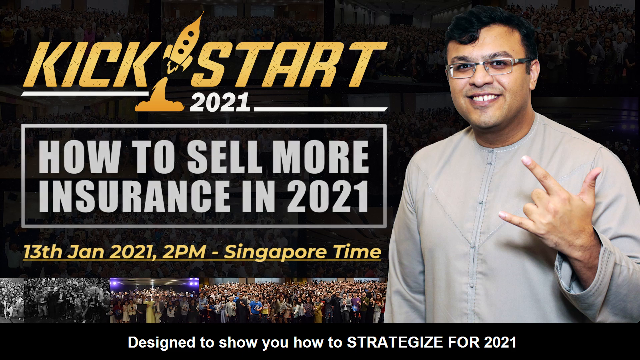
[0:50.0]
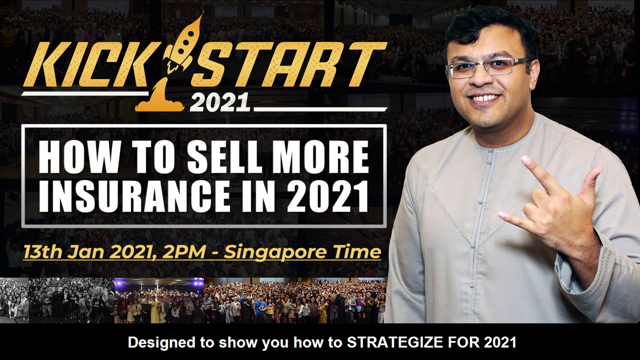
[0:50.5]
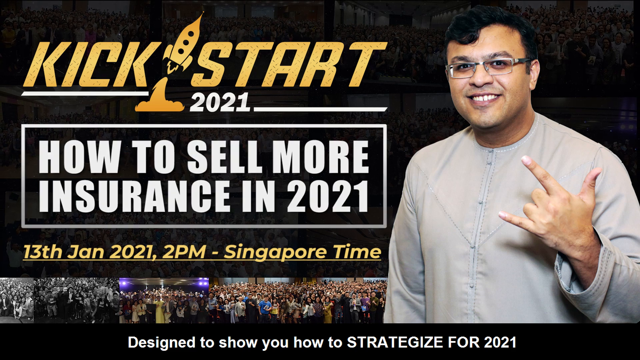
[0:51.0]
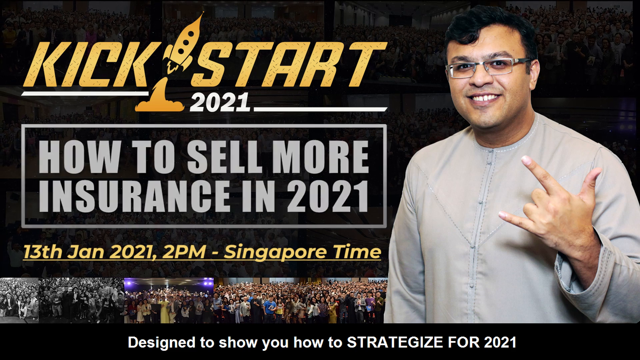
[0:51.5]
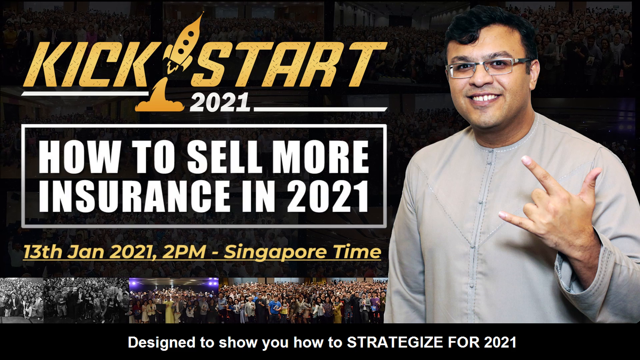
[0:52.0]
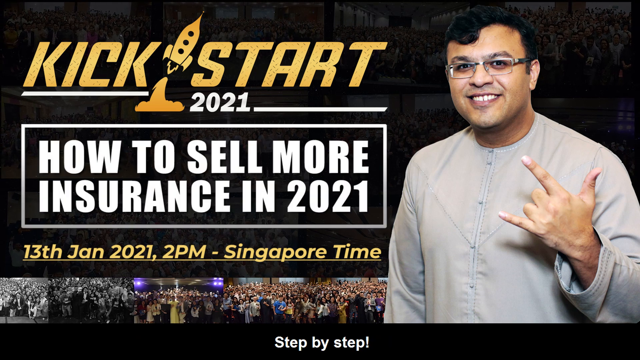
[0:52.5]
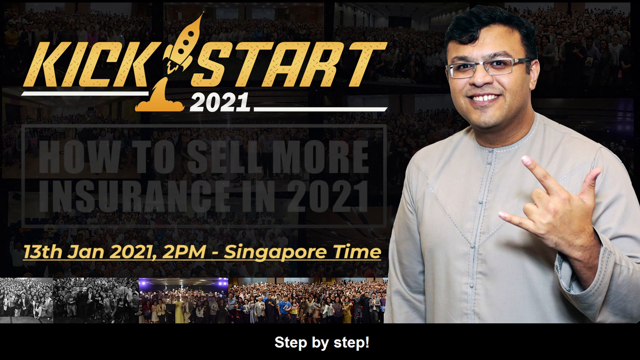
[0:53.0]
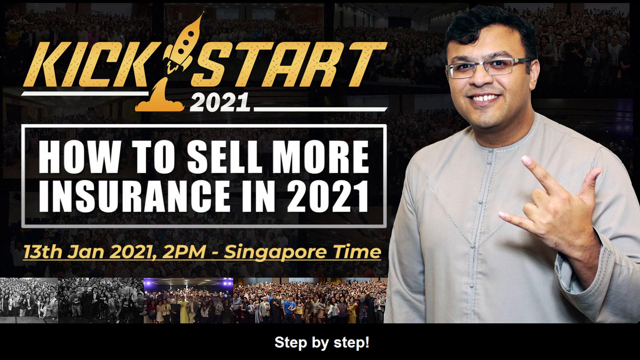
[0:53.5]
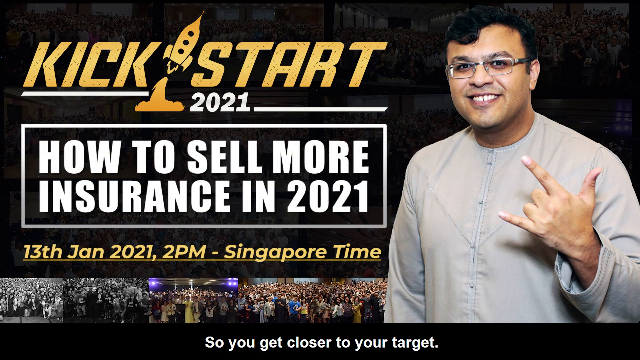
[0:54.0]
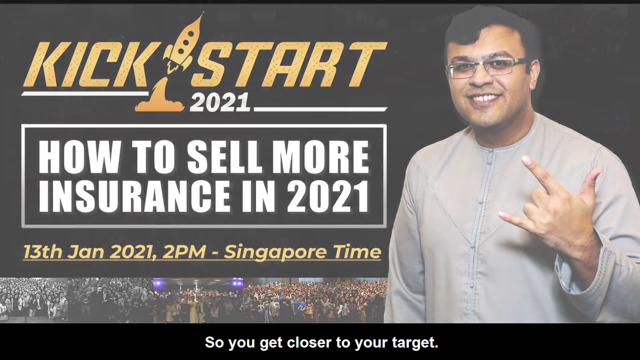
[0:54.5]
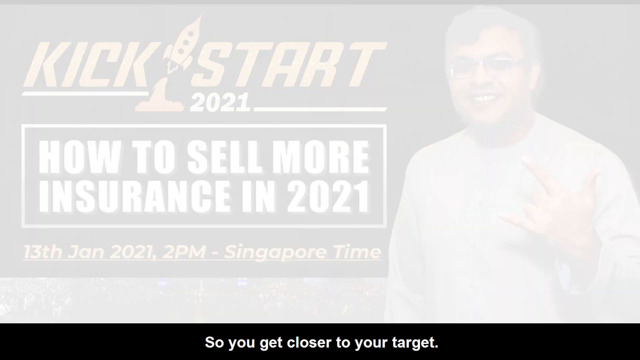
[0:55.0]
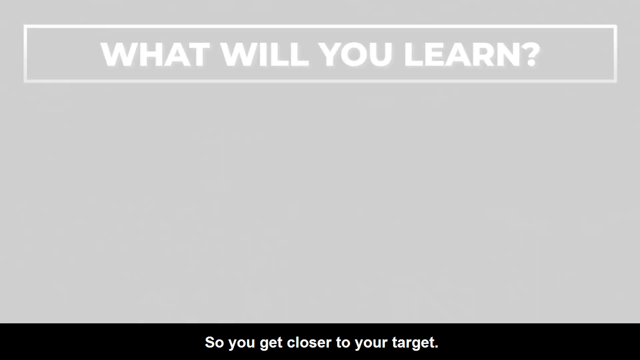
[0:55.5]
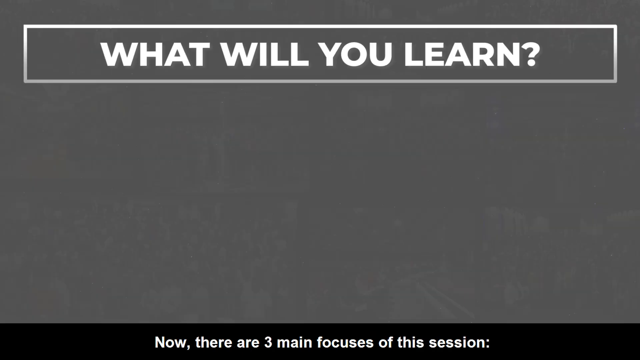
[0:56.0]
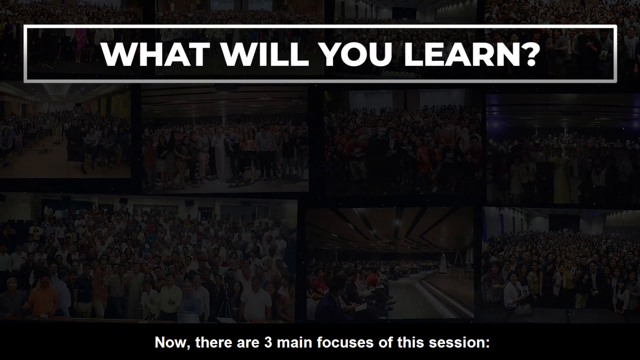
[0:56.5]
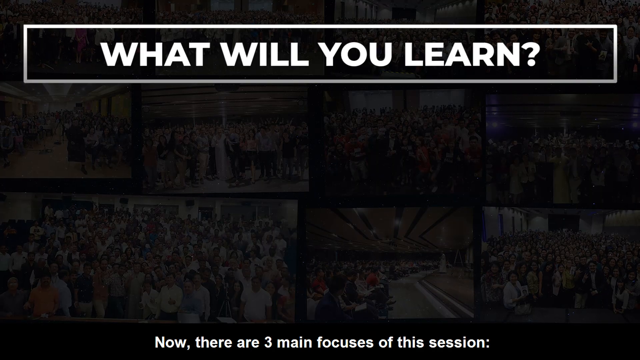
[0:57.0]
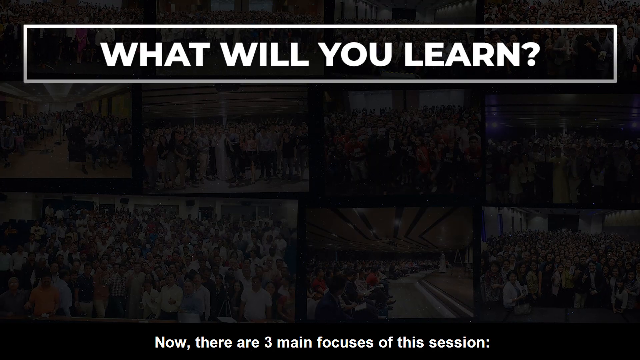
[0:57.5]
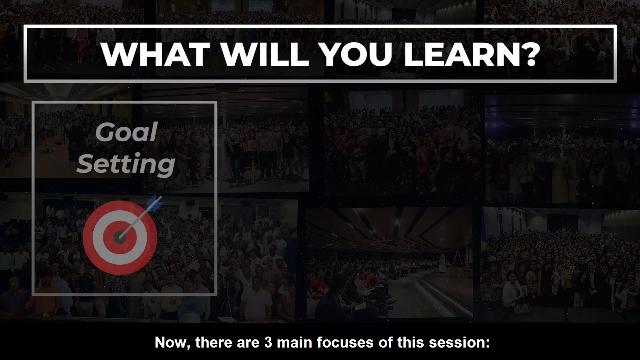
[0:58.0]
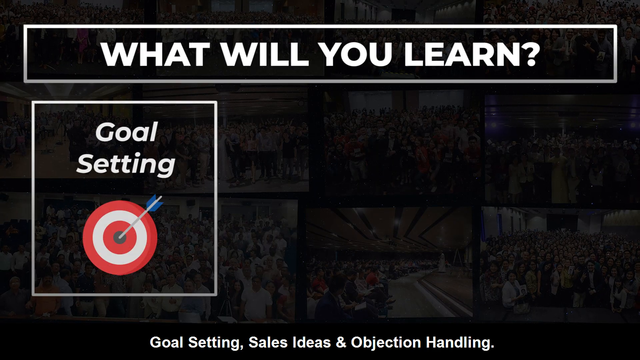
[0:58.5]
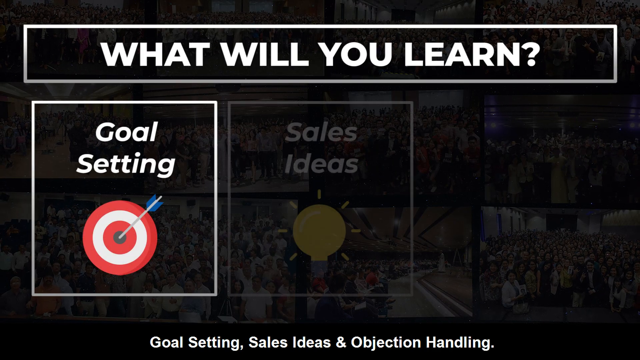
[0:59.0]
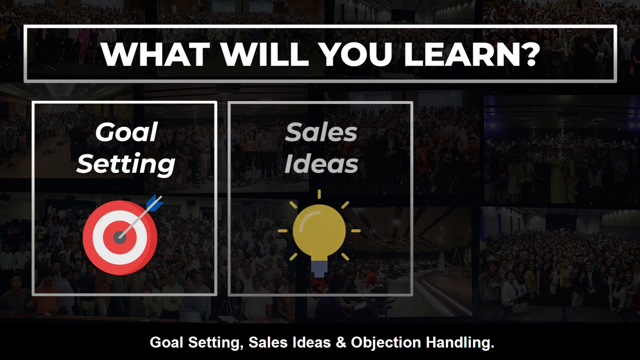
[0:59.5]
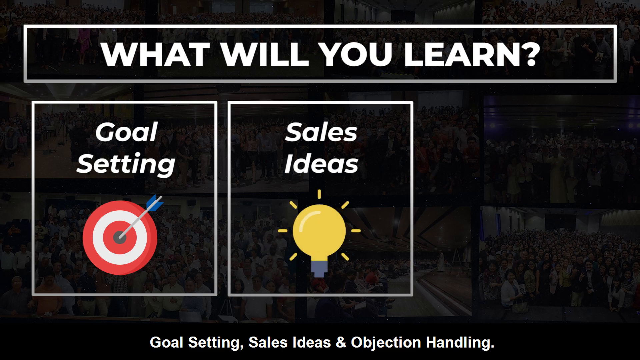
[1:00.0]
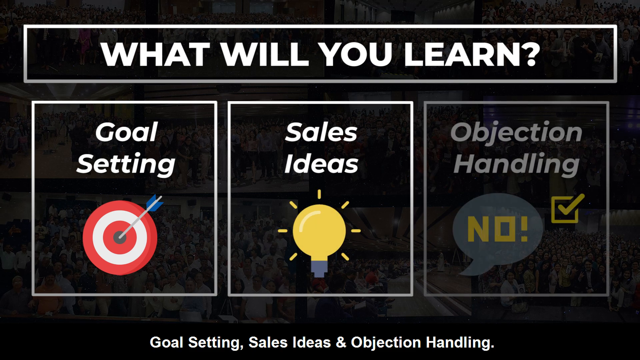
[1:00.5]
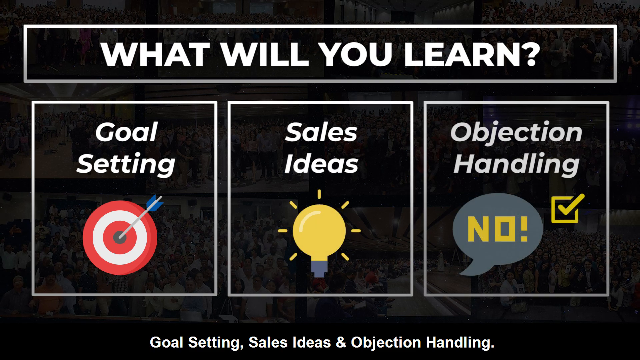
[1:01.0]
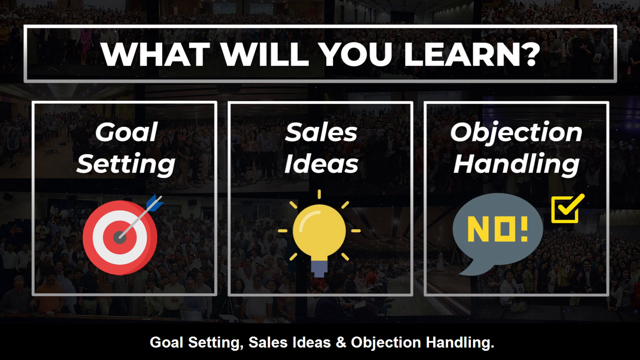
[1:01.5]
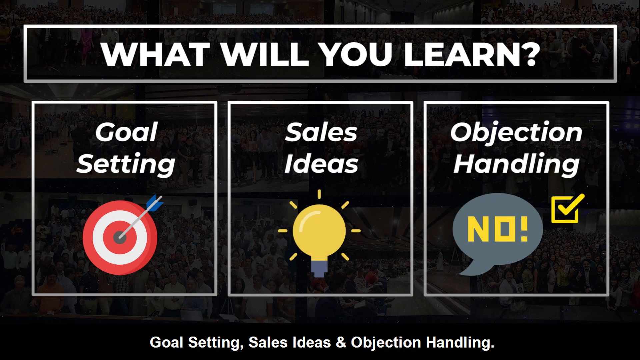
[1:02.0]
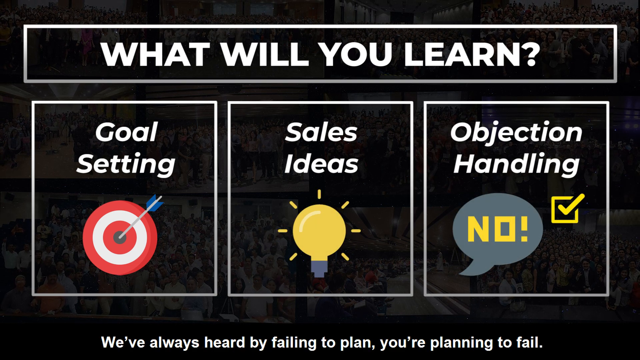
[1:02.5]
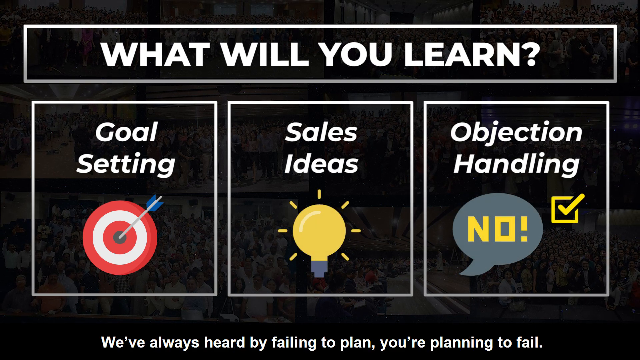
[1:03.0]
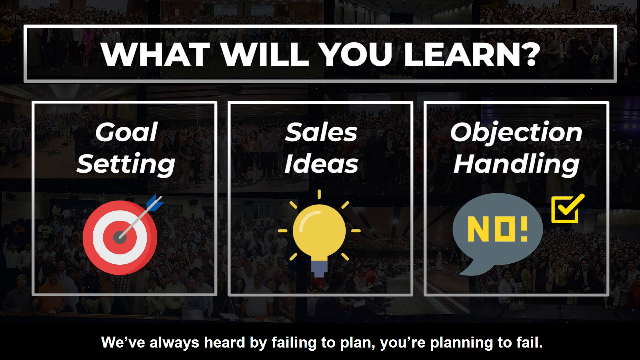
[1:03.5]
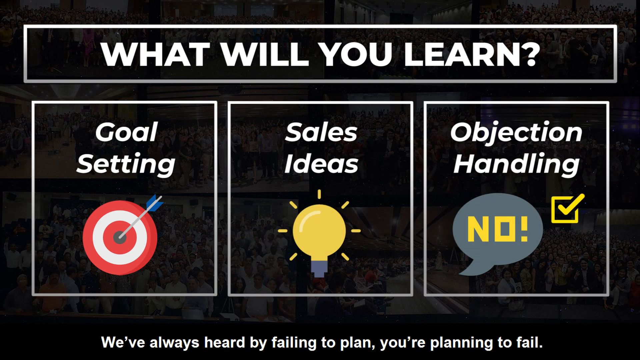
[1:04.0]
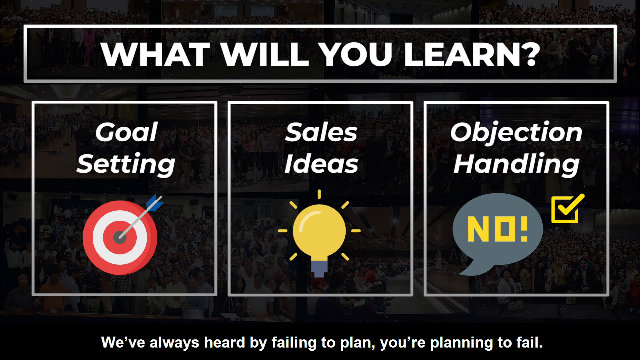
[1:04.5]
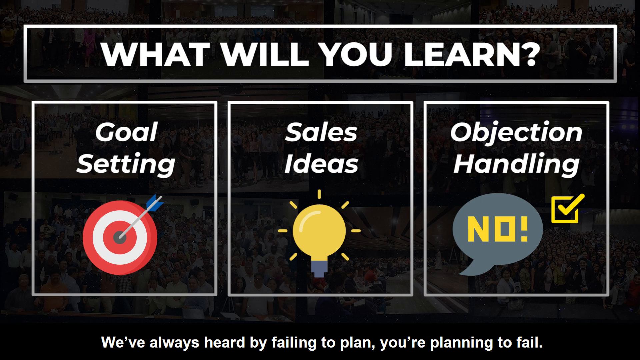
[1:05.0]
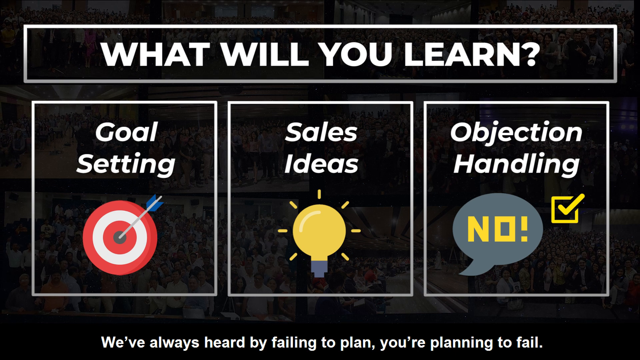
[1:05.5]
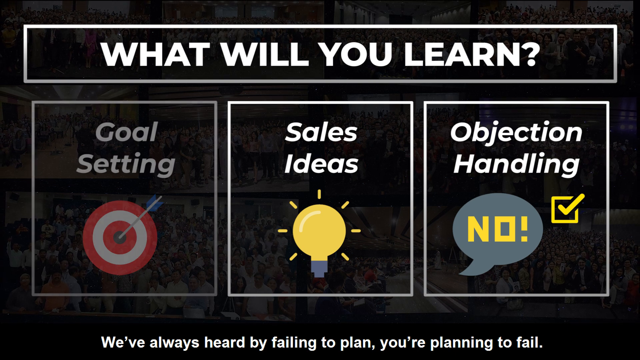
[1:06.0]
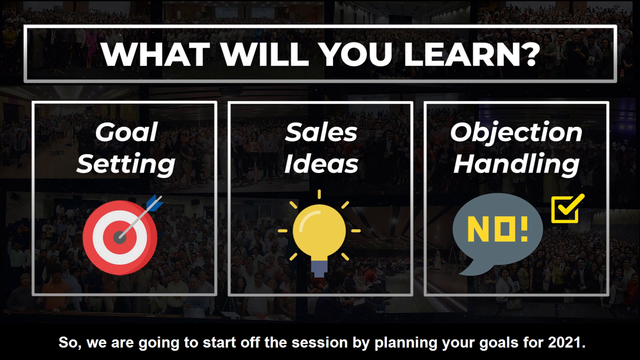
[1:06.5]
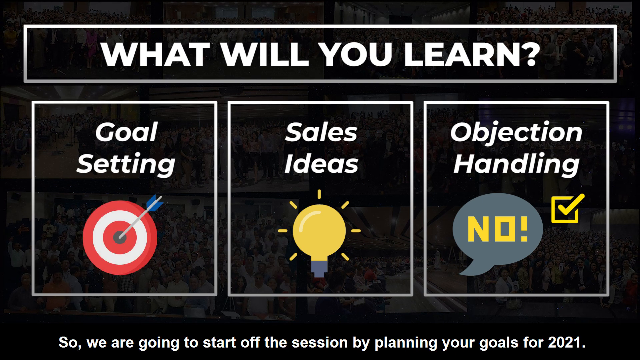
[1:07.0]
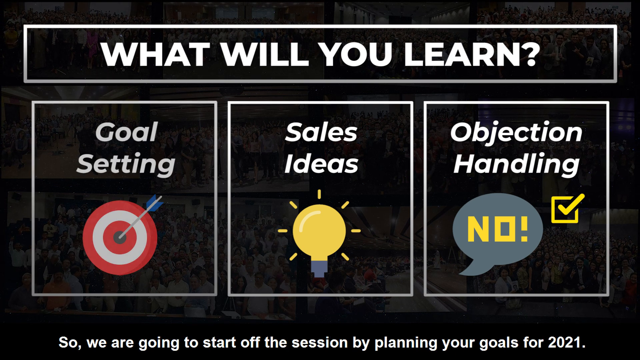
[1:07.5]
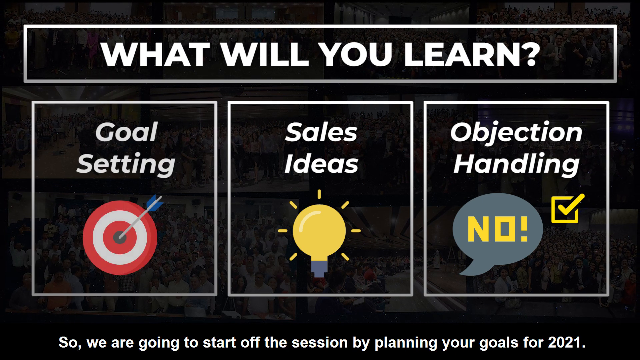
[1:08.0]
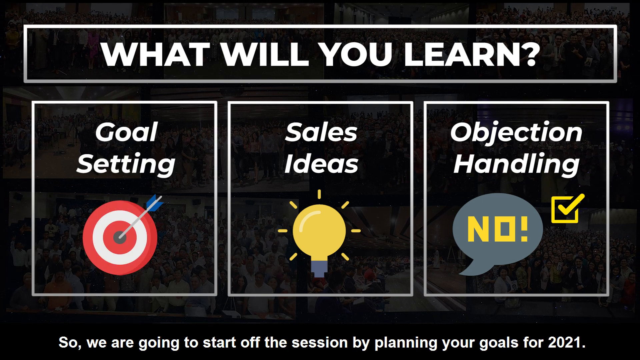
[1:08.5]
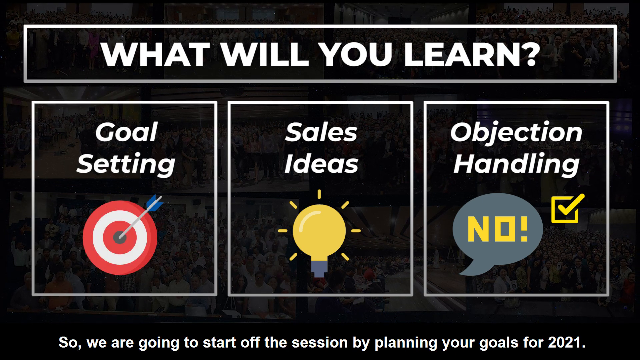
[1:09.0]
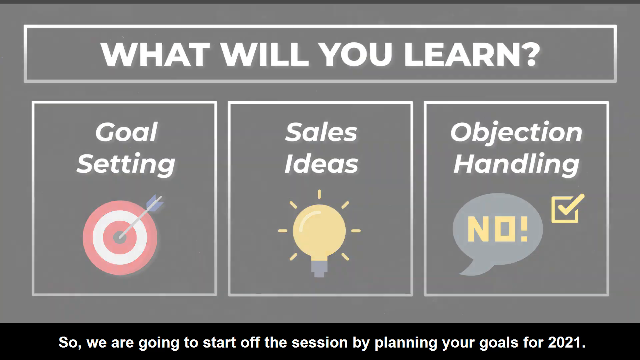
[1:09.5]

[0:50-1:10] A man in a long-sleeved gray suit or button-down shirt is shown. On the left-hand side, "kickstart" appears in yellow, with an image of a rocket between "kick" and "start," and "2021" underneath. Below that, a black box with the text about selling more insurance in 2021 pulses. Small images of multiple people in a room are visible at the bottom. The next shot is a black screen with "what will you learn" in bold white letters at the top. Three boxes follow: "goal setting" with a target, "sales ideas" with a light bulb, and "objection handling" with a thought bubble that says "no" and a yellow check mark. The "goal setting" box pulses for a few seconds.